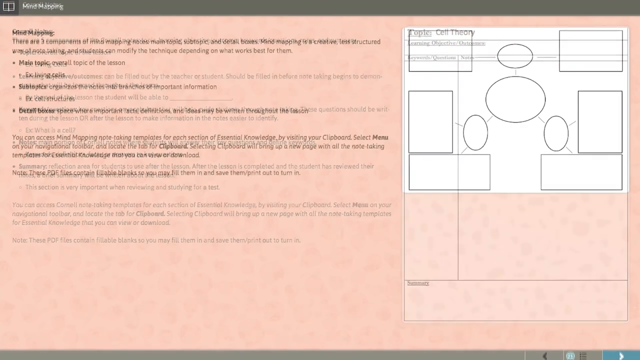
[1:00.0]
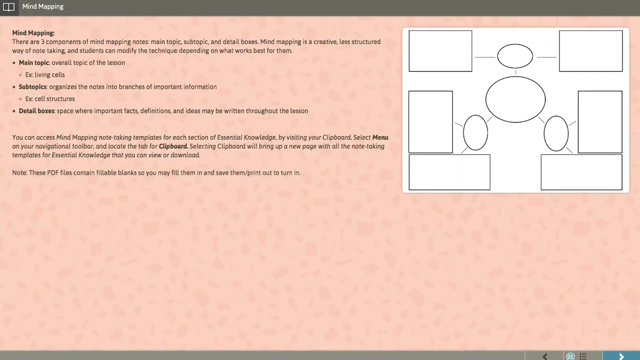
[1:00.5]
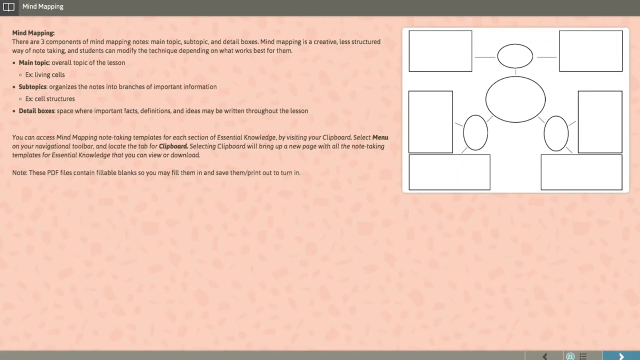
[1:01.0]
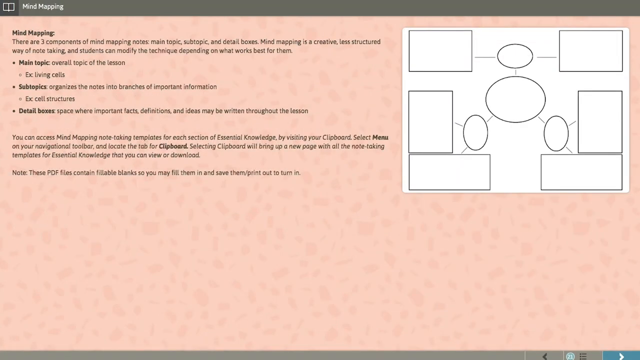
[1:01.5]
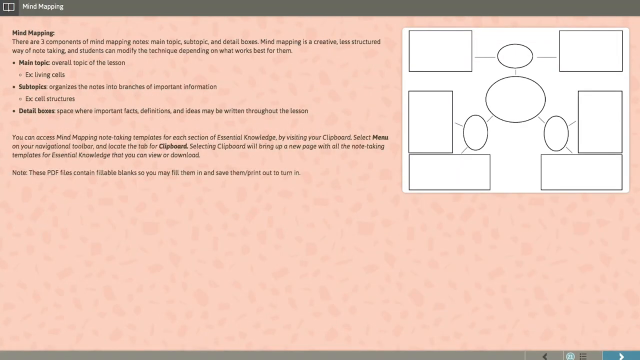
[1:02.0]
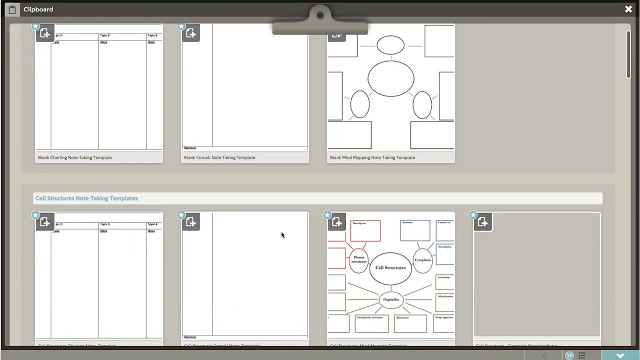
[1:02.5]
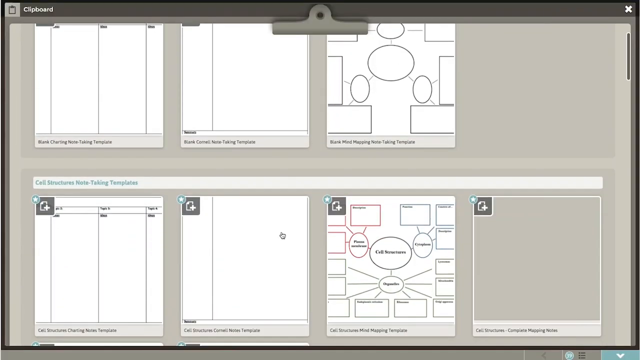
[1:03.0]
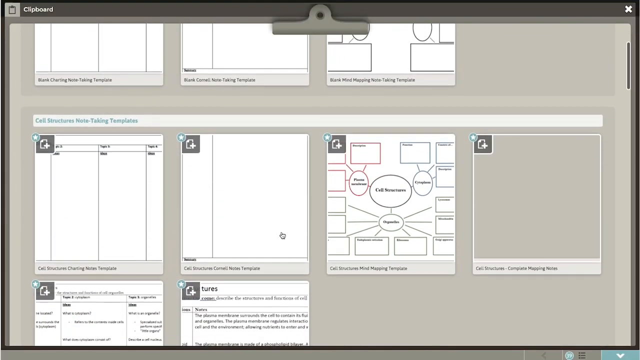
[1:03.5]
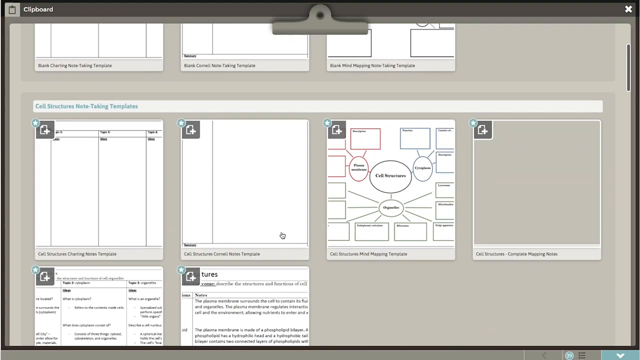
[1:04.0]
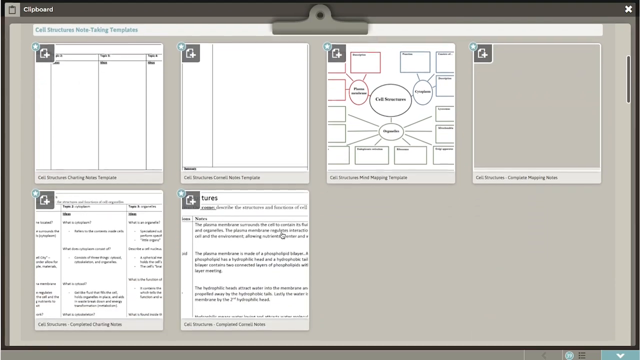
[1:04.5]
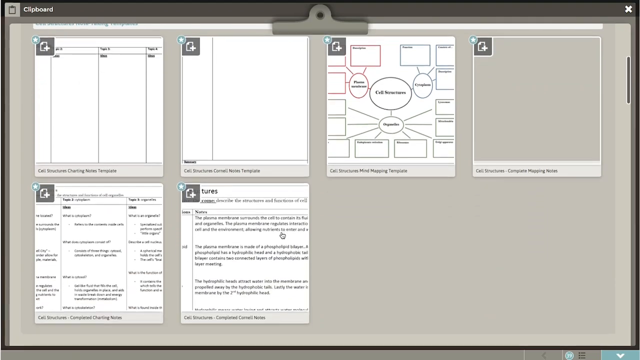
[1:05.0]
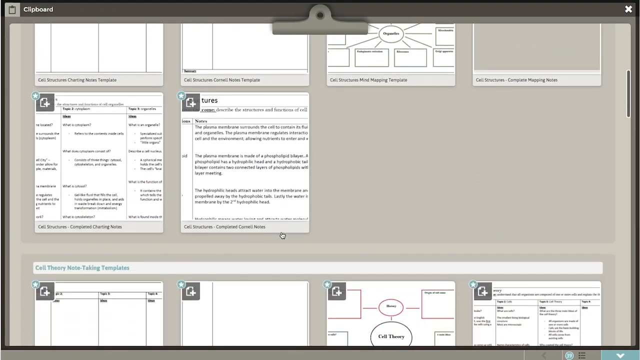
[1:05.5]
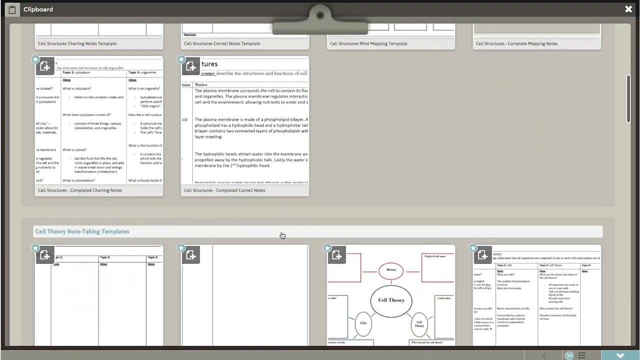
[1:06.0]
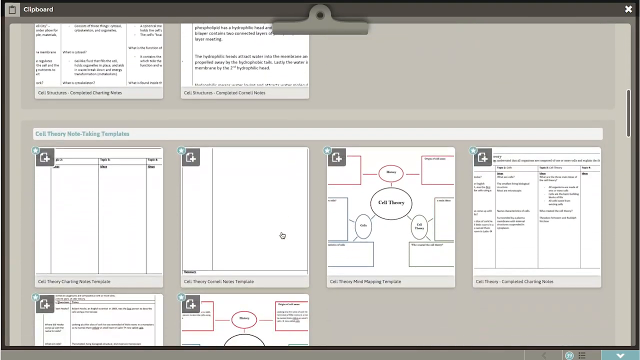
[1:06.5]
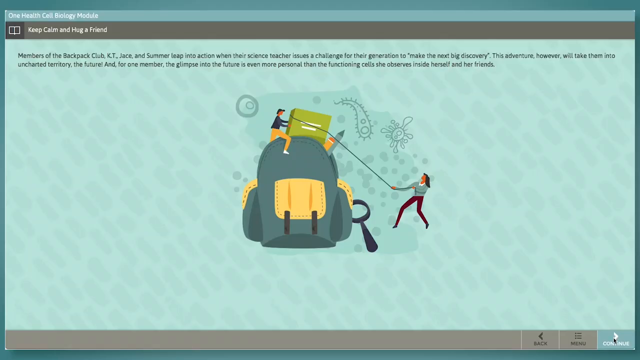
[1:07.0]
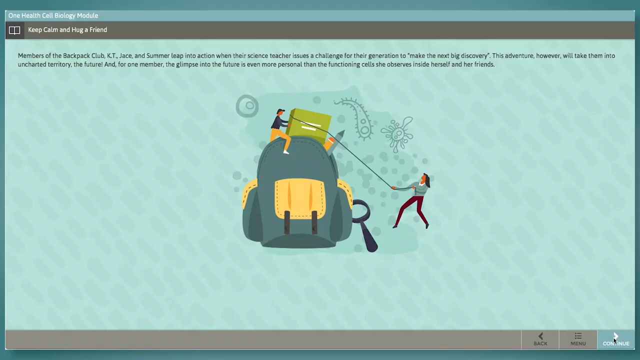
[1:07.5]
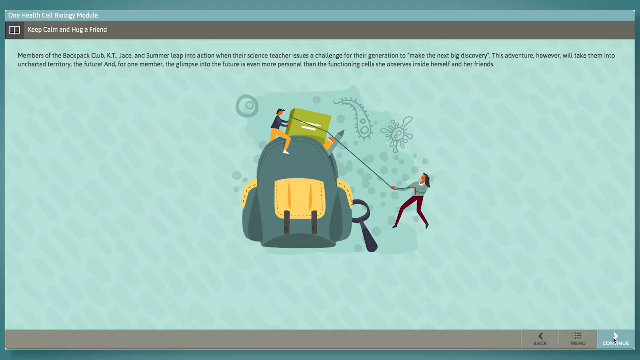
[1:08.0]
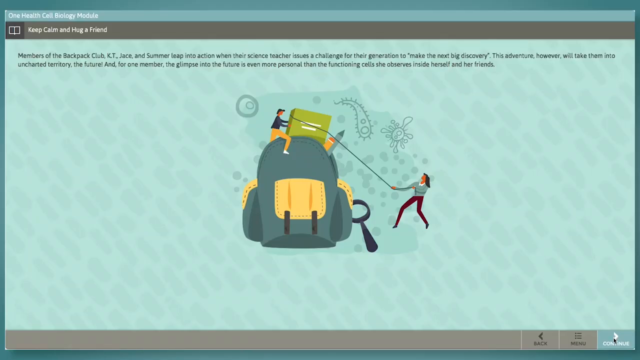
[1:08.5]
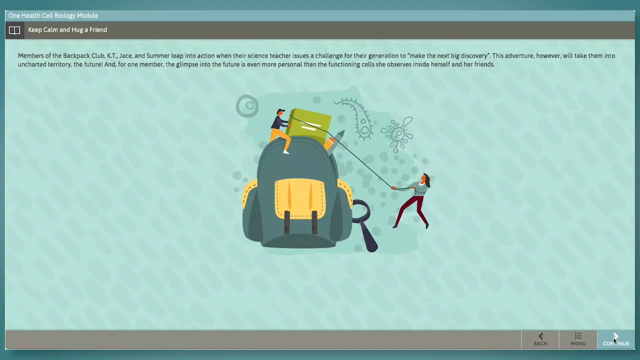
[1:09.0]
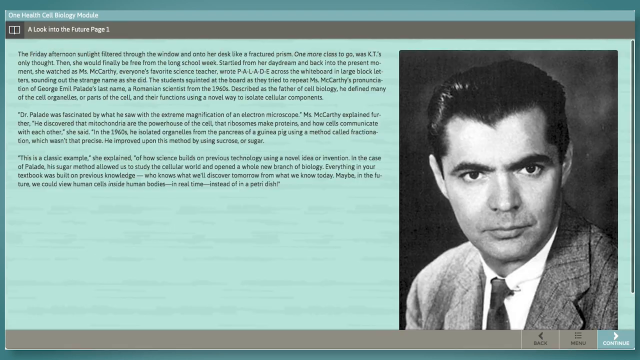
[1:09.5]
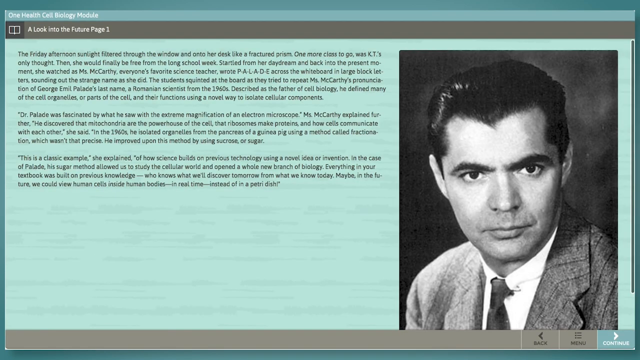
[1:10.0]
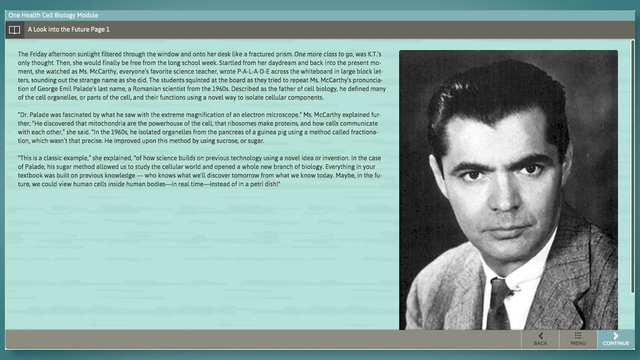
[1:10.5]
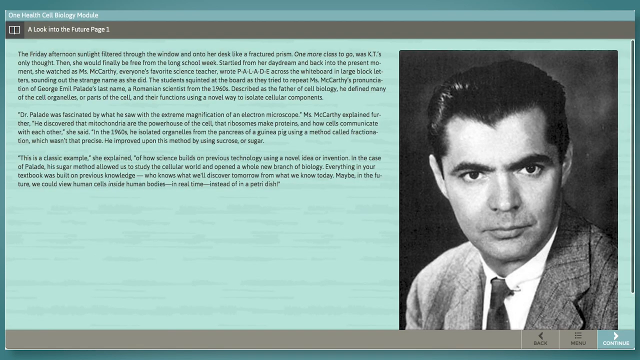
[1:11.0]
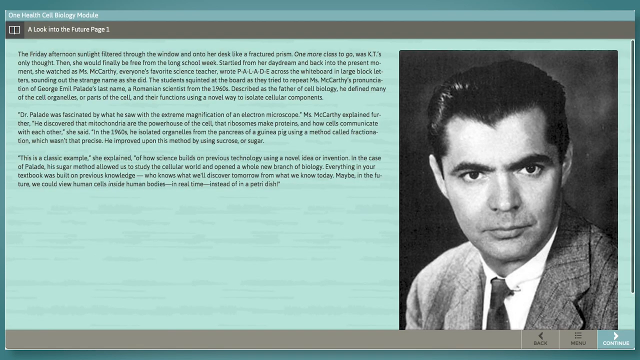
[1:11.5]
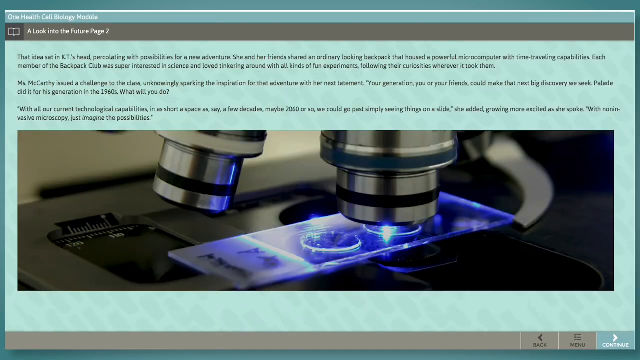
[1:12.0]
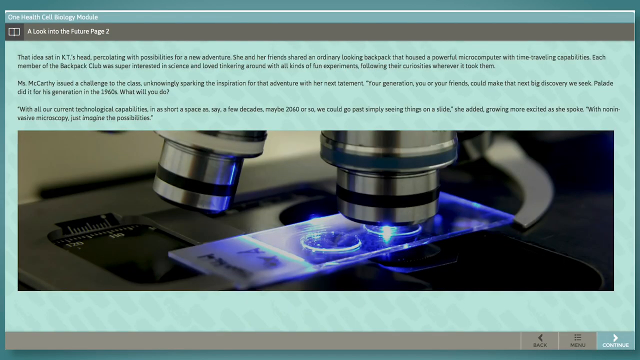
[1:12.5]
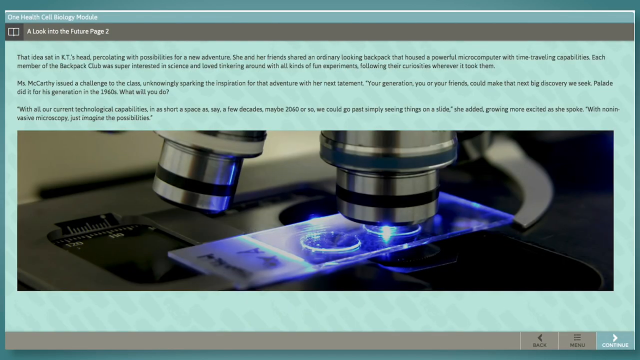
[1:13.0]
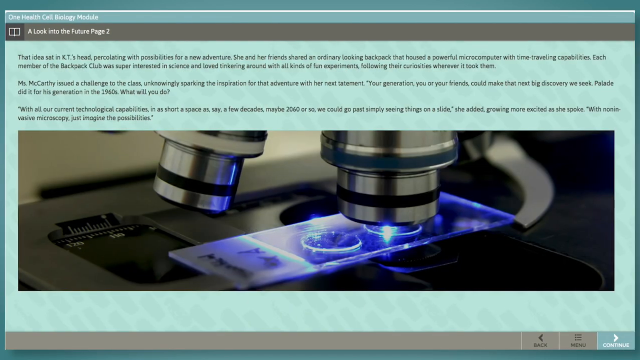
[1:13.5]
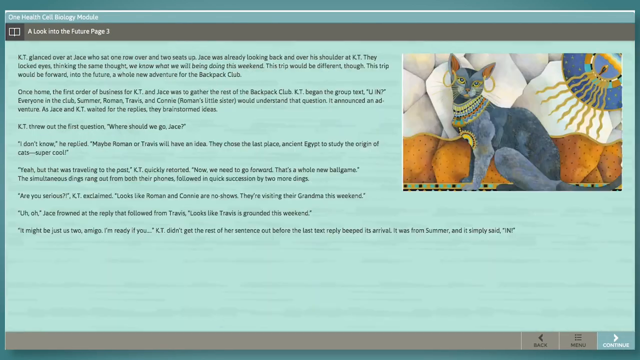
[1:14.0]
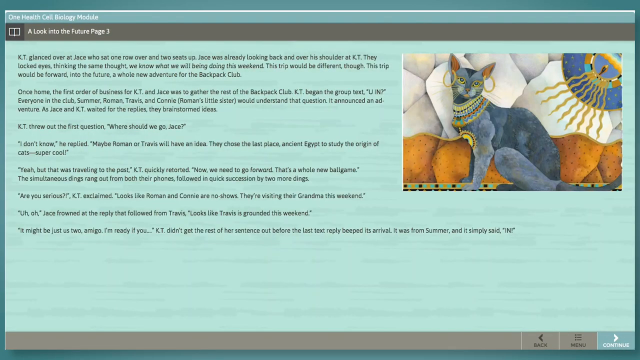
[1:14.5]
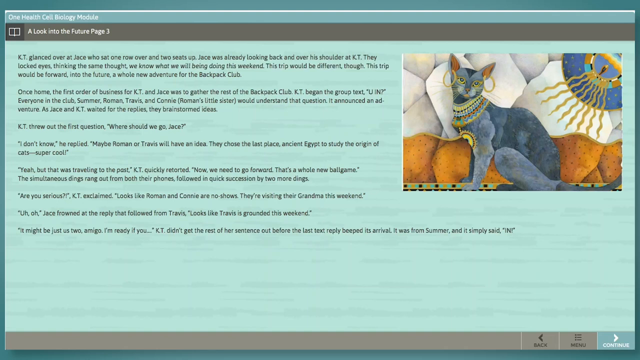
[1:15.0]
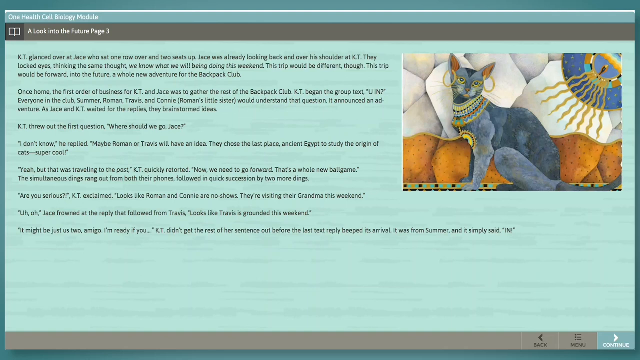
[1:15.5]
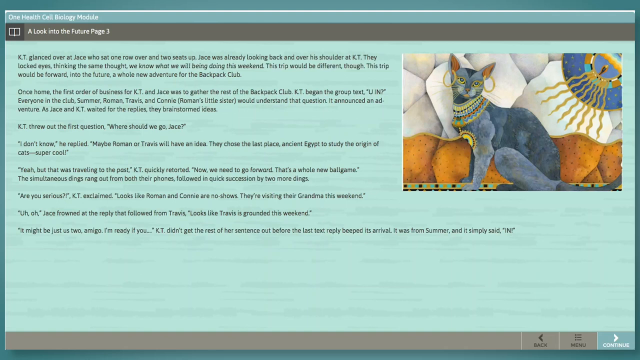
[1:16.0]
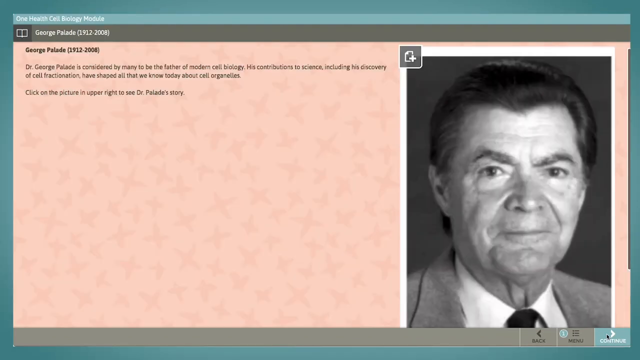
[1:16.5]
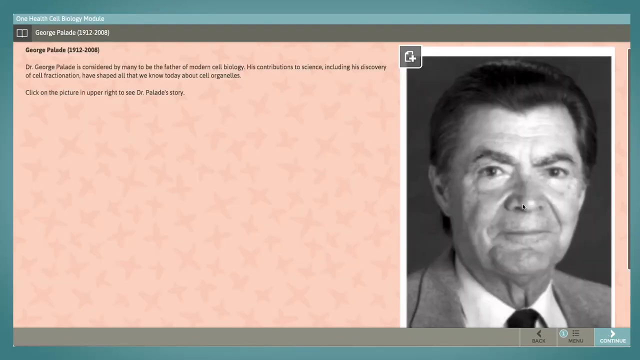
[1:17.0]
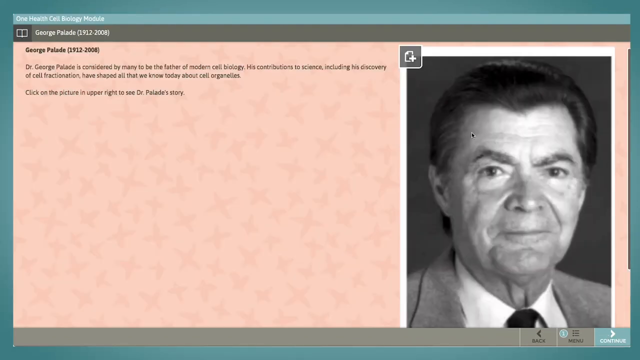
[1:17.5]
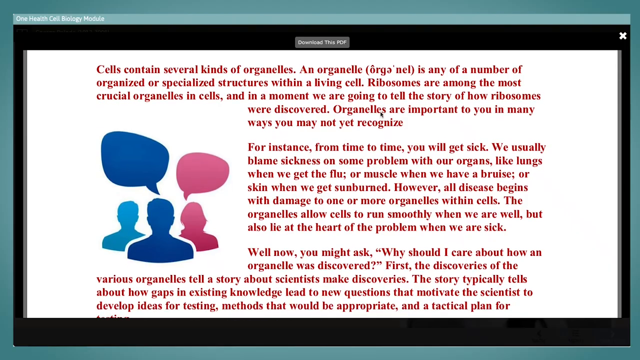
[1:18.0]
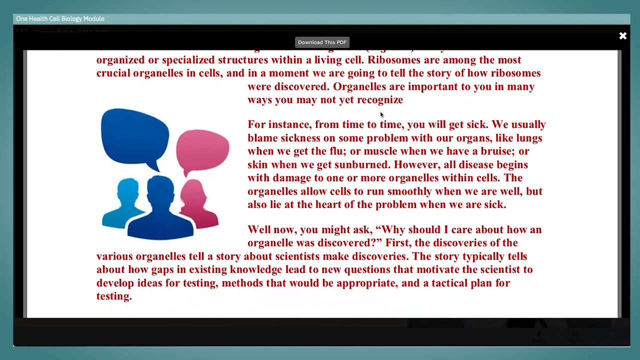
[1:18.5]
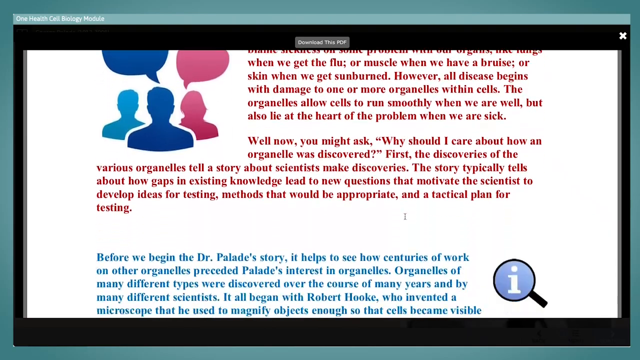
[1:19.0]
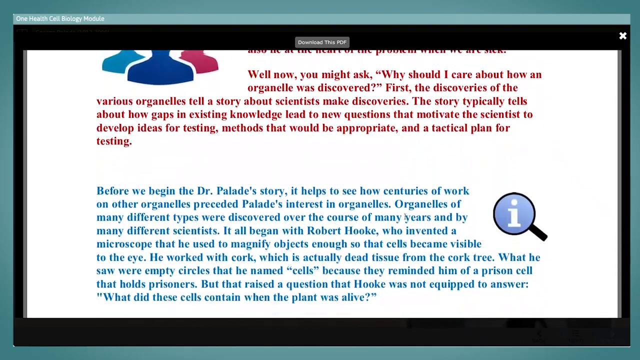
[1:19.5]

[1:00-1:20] A page with a peach-colored background has, on the right side, a white and black sort of layout for taking notes labeled "cell theory". On the left, black text explains how to use this mind mapping system, with main topic, sub topic and detail boxes, and instructions on how to use it. Forms for different kinds of note taking on the module's clipboard follow, all with white backgrounds and black text or black lines. Another page is labeled "keep calm and hug a friend", with a green background, a picture of two people climbing on a backpack, and black text. Another module page says "a look into the future. Page one", with a black and white picture of a man on the right and black text on a green background on the left. Next is a page with an up-close photograph of a microscope in use and text above the photo. Then "a look into the future page 3" shows an illustration of a cat with black text on a green background to its left. Finally, a white page with red writing about cells appears, and the writing then changes to blue.